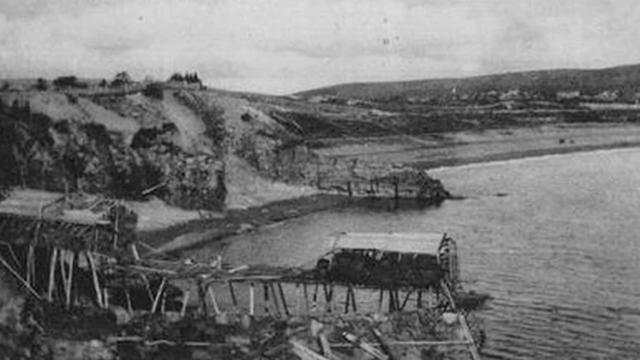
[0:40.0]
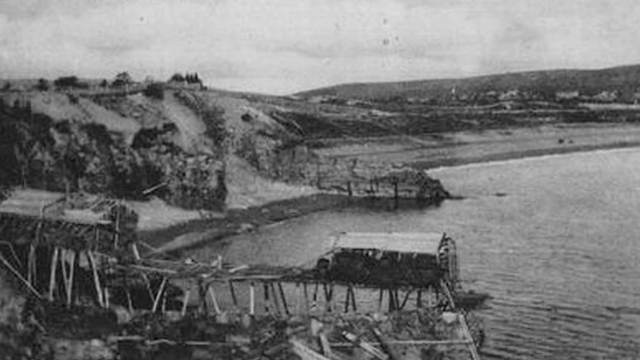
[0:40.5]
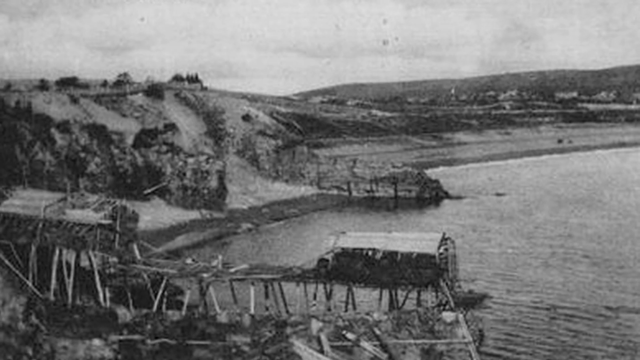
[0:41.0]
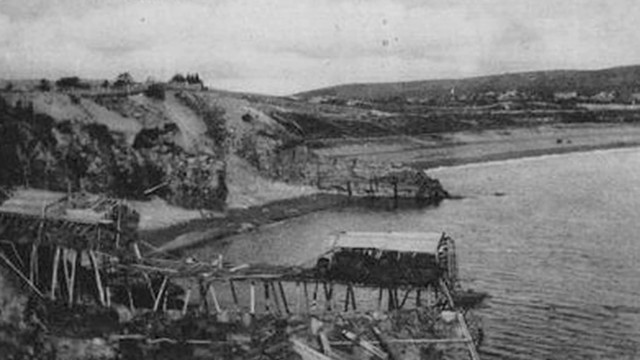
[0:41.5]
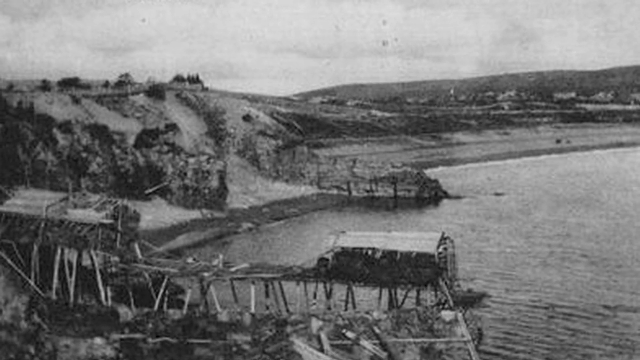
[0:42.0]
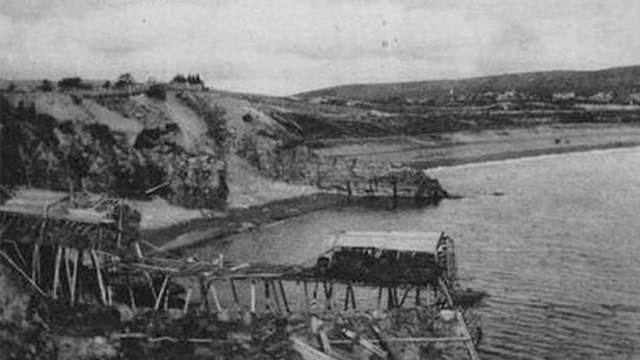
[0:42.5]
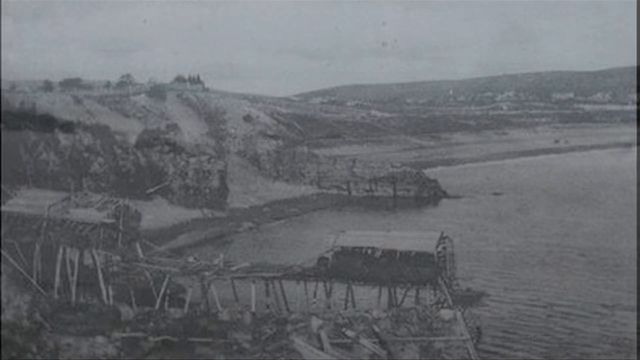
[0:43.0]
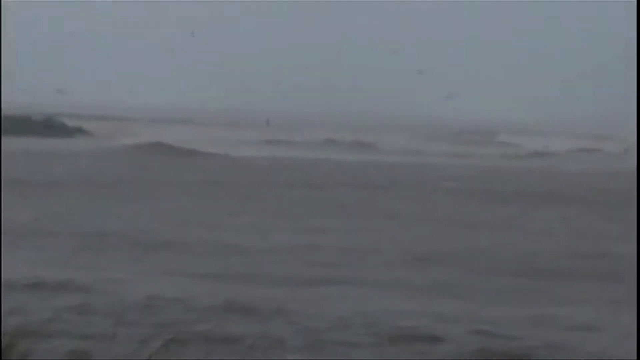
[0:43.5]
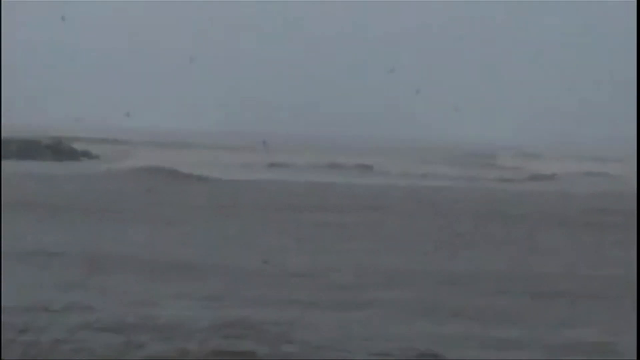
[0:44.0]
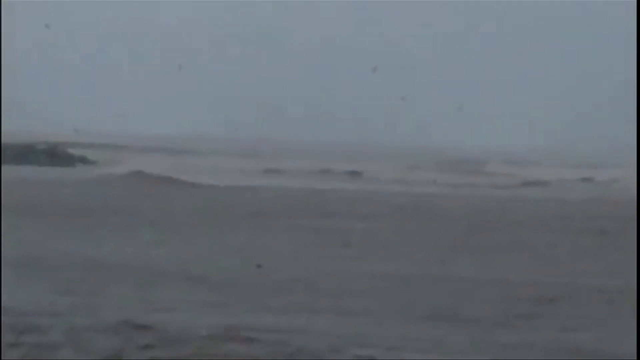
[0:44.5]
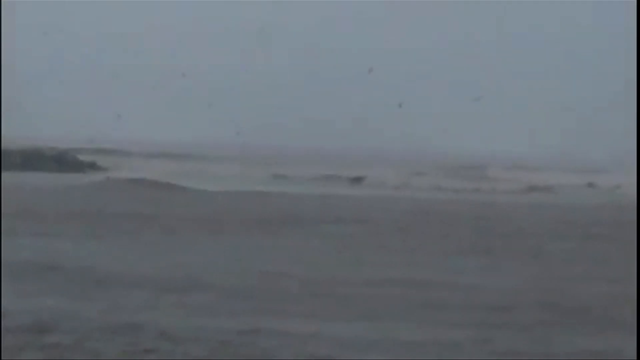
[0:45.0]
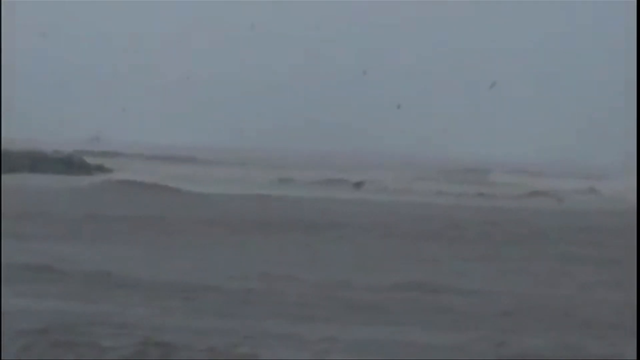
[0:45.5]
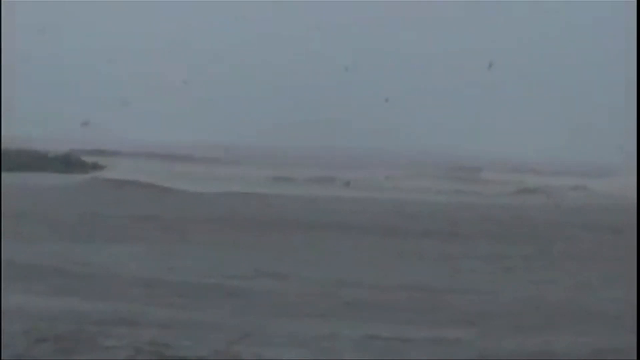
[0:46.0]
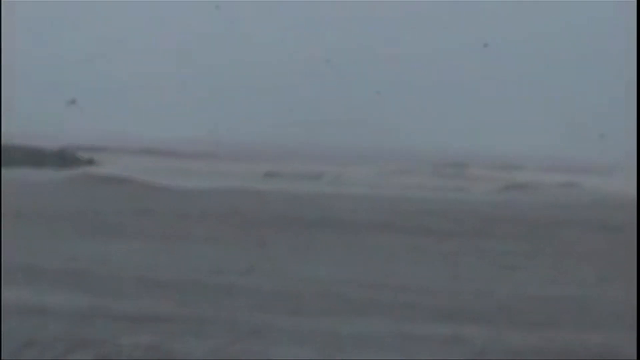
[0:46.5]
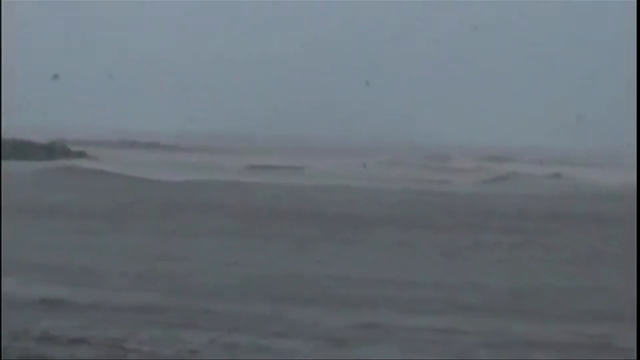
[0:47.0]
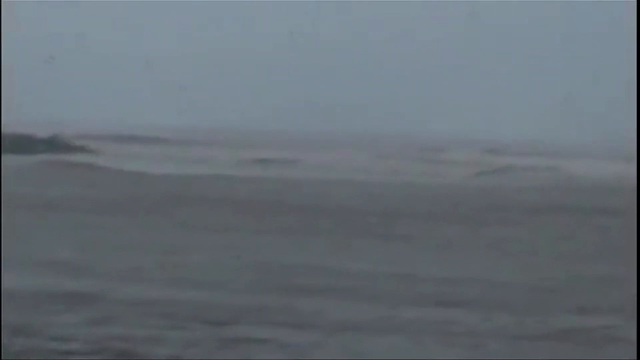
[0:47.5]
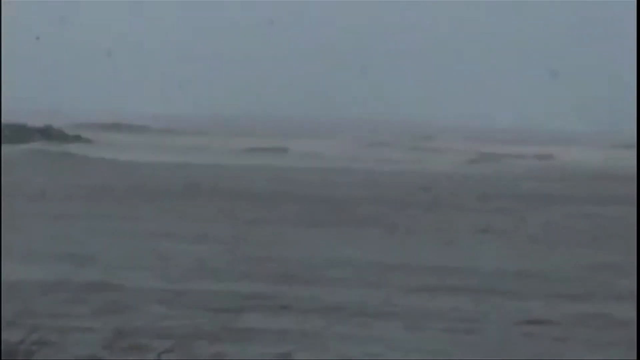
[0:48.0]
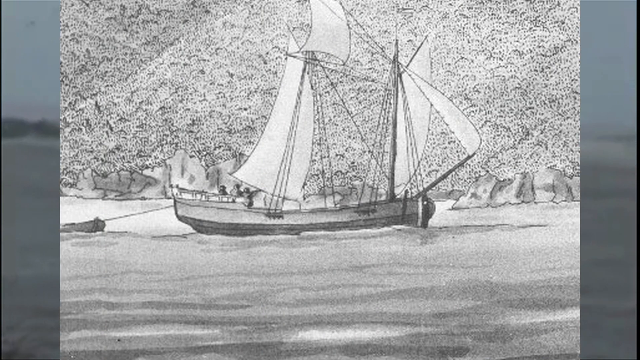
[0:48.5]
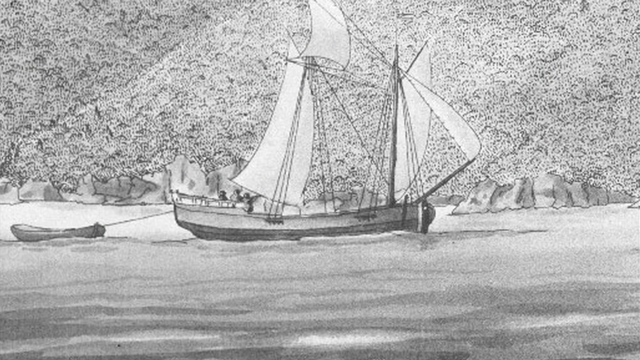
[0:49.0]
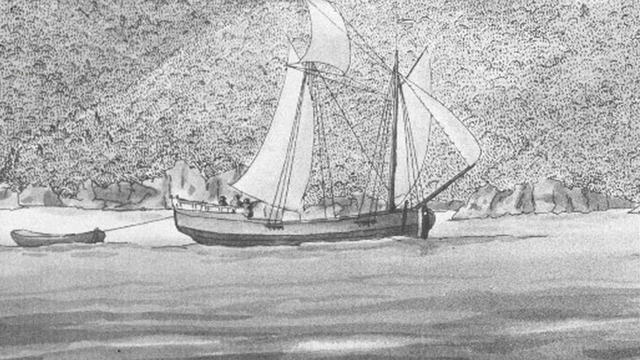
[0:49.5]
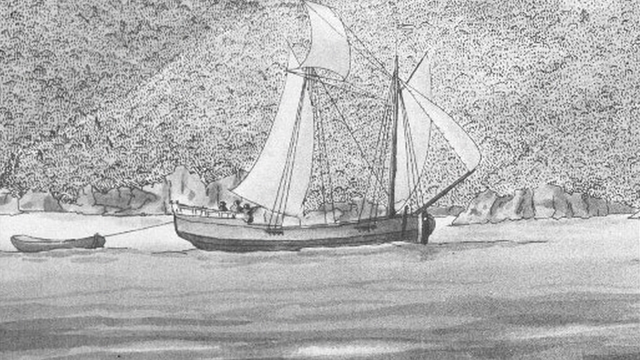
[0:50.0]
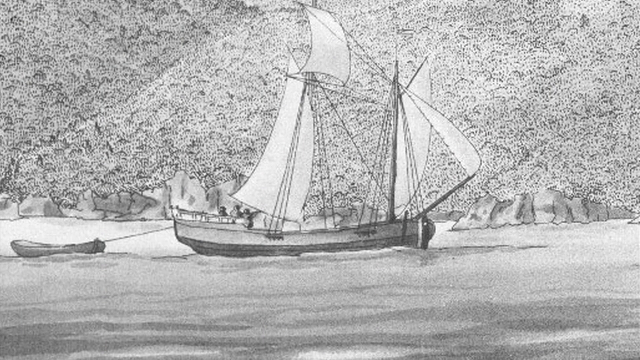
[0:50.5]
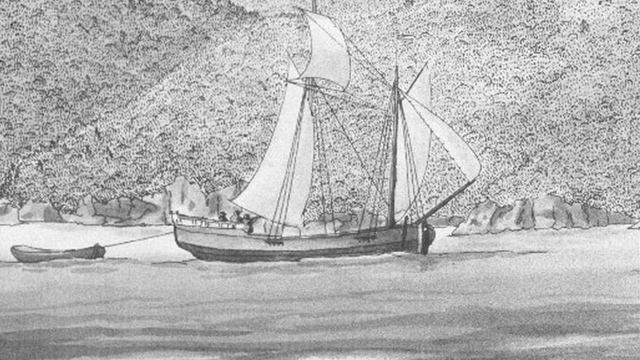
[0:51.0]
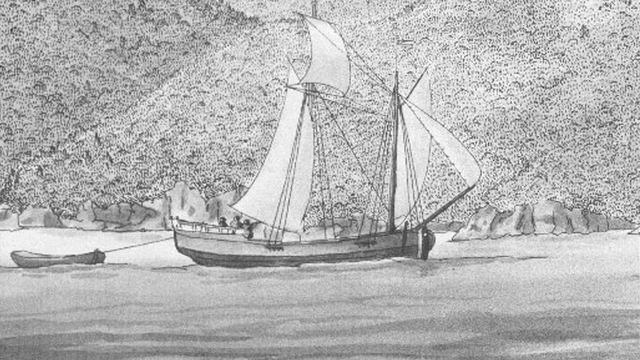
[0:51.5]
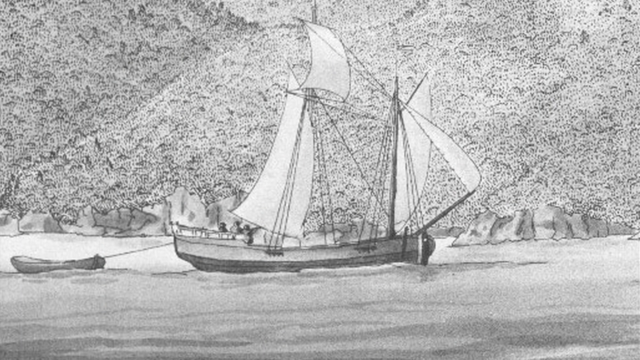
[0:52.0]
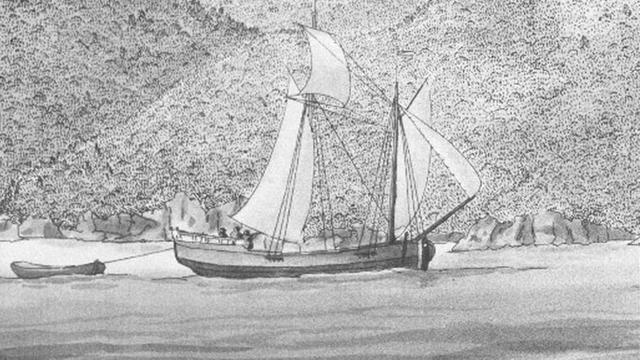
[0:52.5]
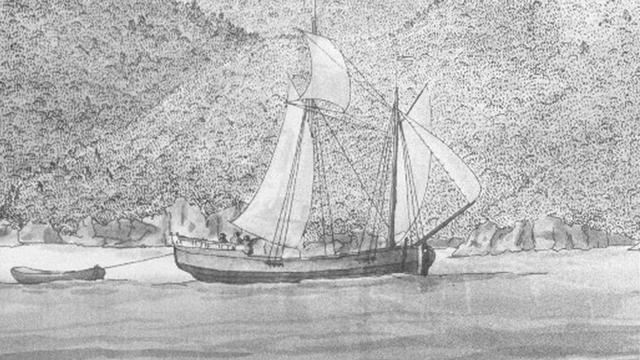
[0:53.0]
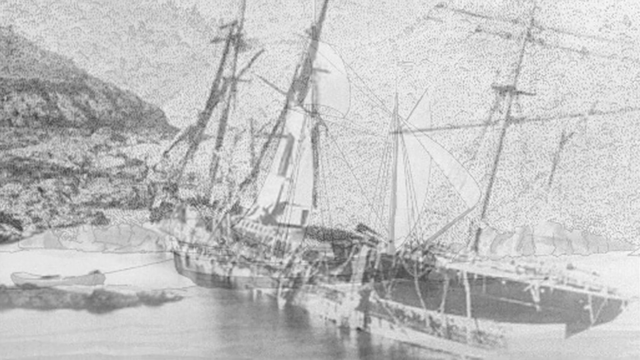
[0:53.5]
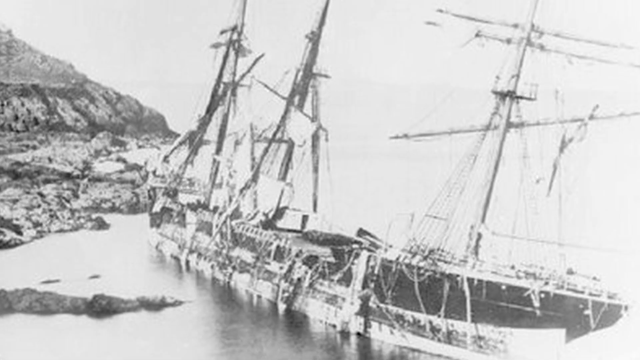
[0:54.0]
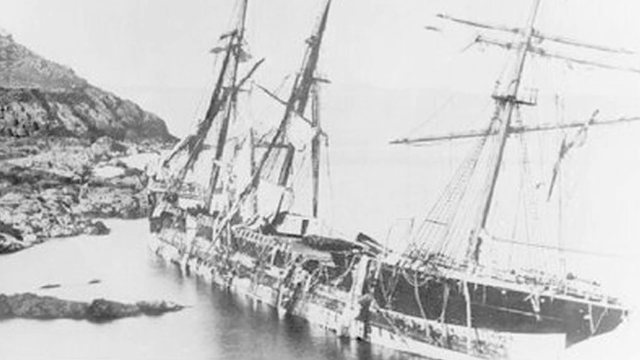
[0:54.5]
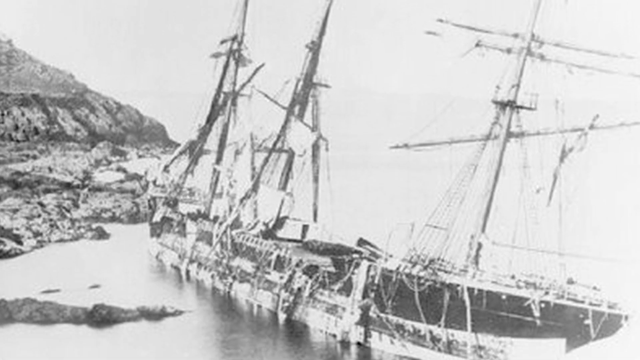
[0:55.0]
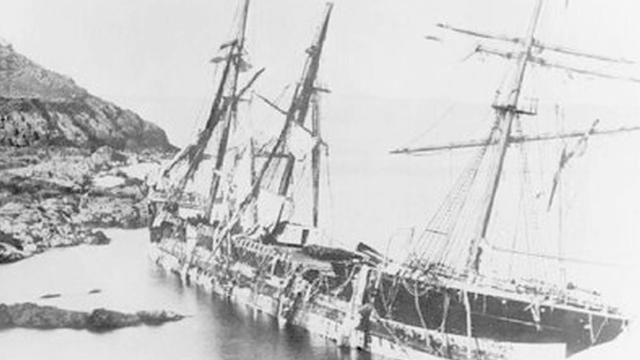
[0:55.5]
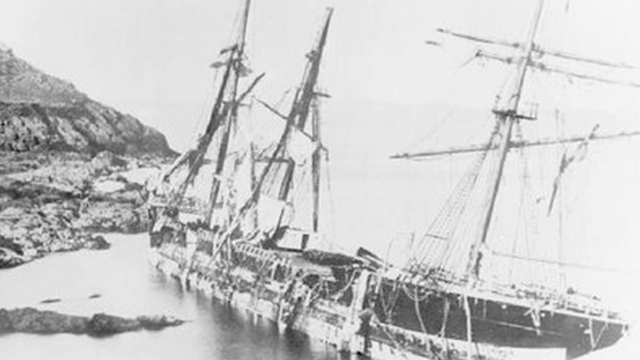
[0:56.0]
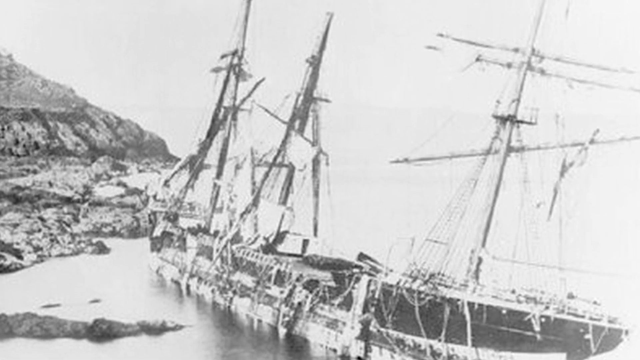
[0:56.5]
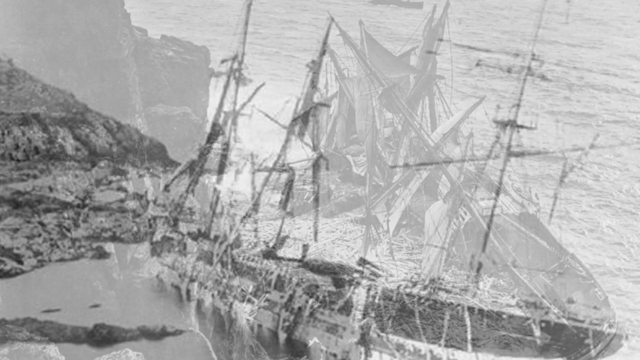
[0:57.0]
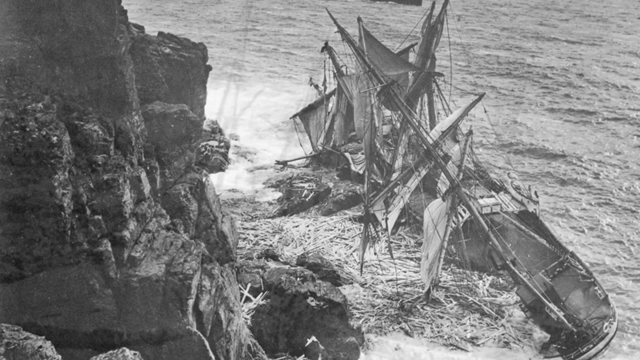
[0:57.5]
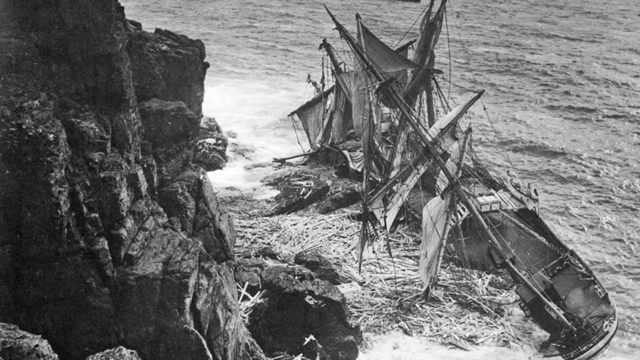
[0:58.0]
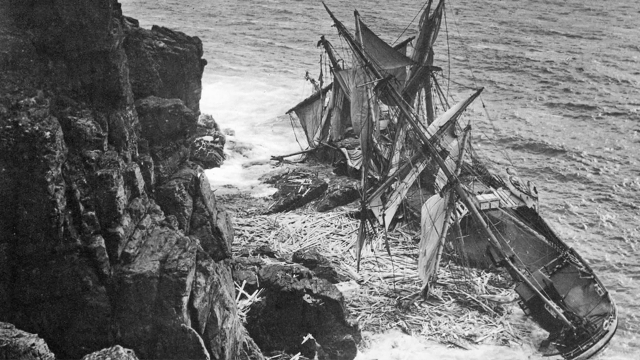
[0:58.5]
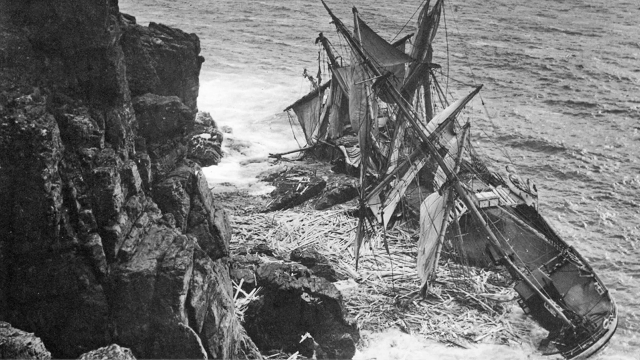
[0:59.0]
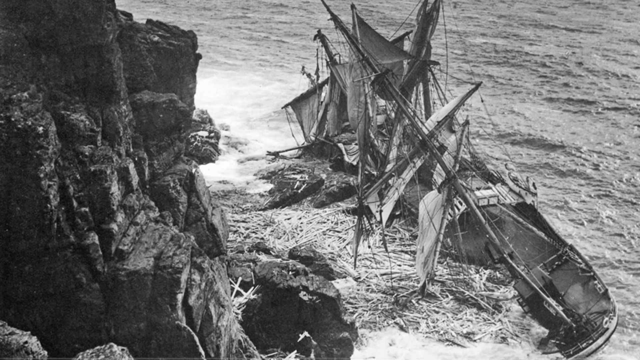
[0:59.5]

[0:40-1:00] Shattered debris, almost like a bridge, is in the foreground. In the background is a mountainscape next to the water and a similar bridge-like element coming into the water. The video moves to rocky footage of what looks to be waves, or gray water movement that is not easy to see. Next is an image of a boat with large sails dragging another boat behind it; the boat faces right, is on water, and is in front of a drawn mountain with a lot of texture, with a few rocks scattered in the image. The boat has three large masts, and the camera pans up along them. Then a photo flashes up of a boat that looks to have crashed onto a beach, tilted over on its side as if it hit something, with the same cliff-like structure nearby. Finally, very quickly, an even more devastated boat is shown on its side, surrounded by debris and what seems to be grass, right off the large cliff.